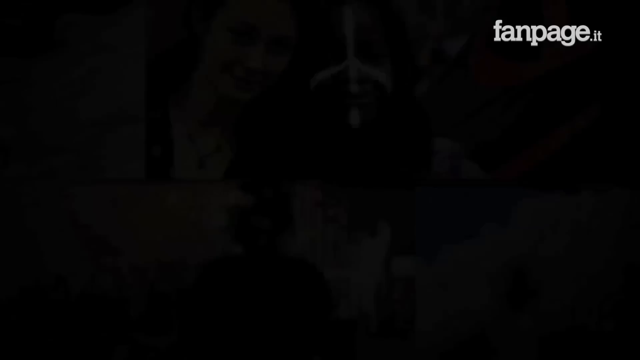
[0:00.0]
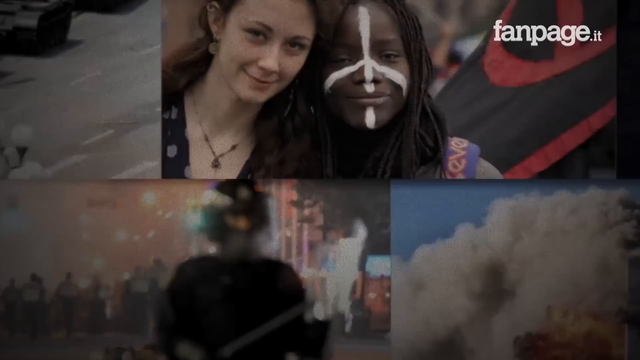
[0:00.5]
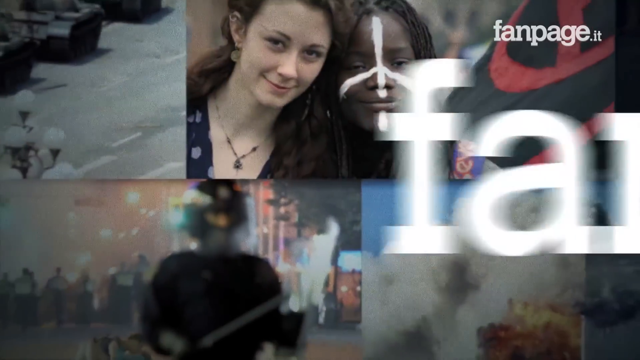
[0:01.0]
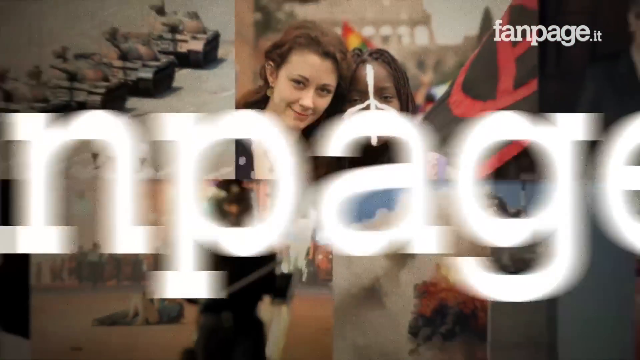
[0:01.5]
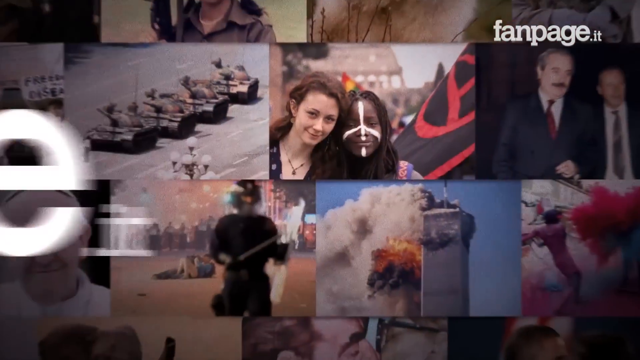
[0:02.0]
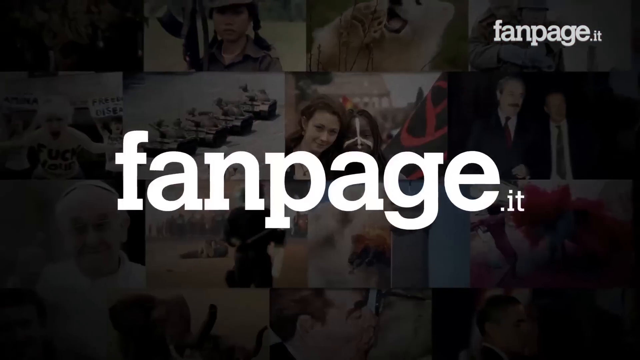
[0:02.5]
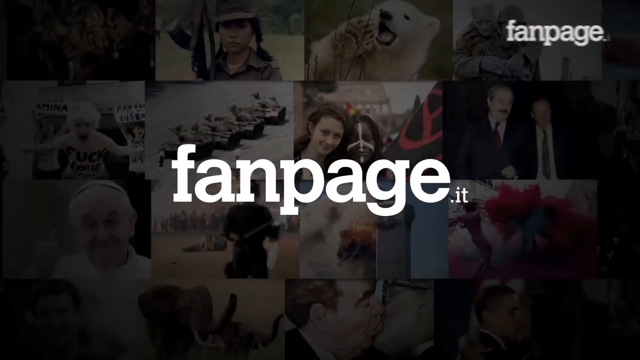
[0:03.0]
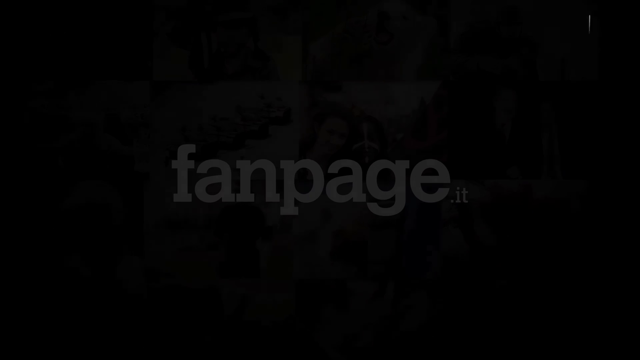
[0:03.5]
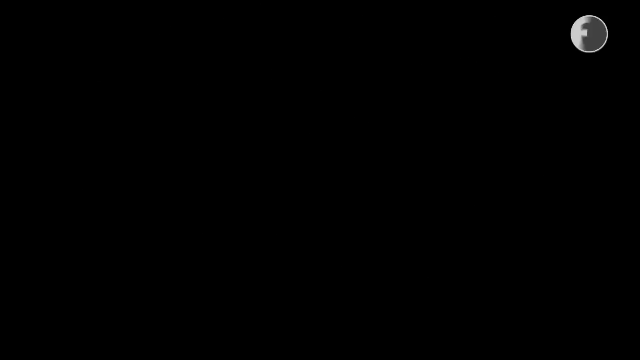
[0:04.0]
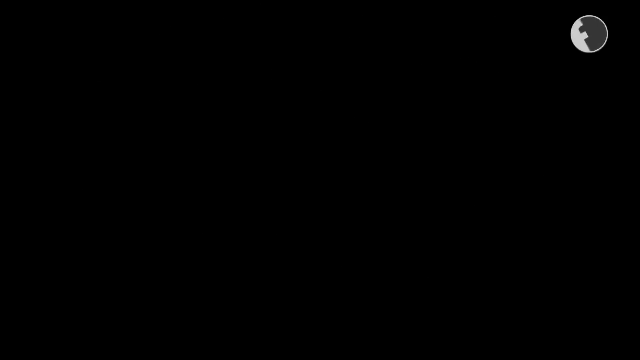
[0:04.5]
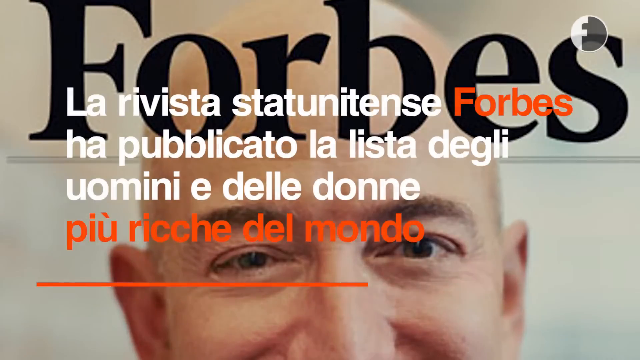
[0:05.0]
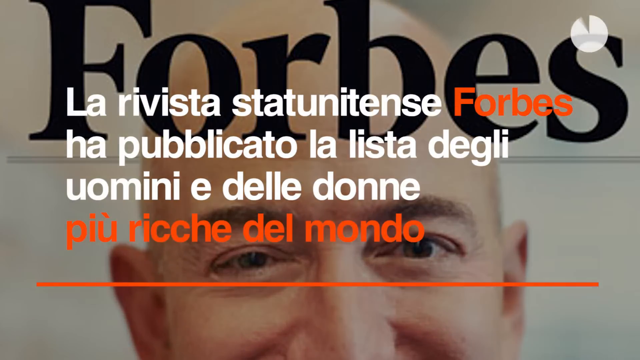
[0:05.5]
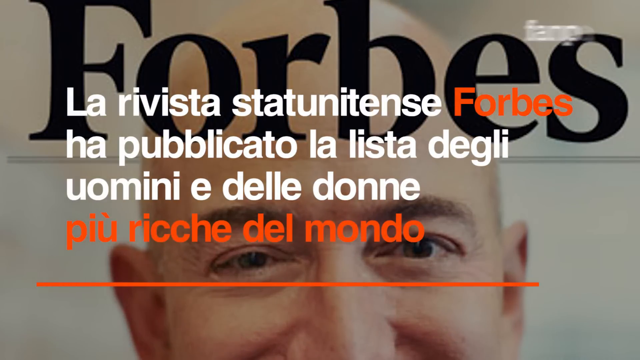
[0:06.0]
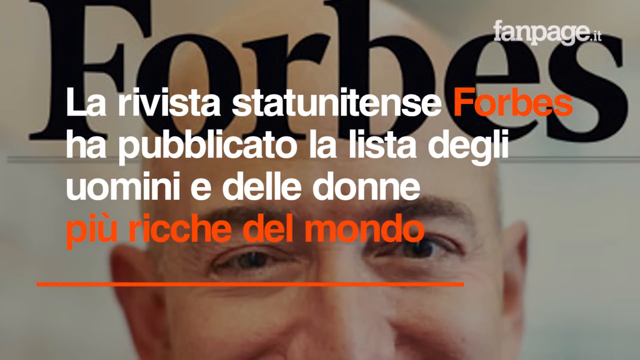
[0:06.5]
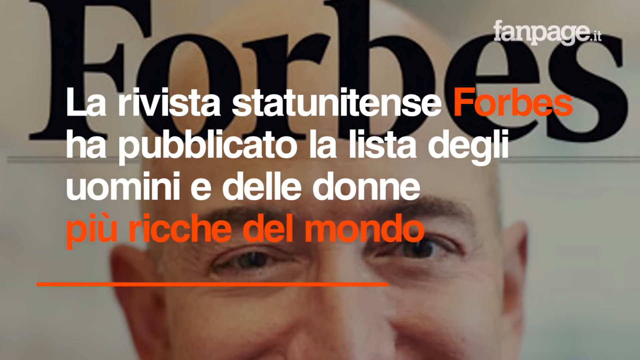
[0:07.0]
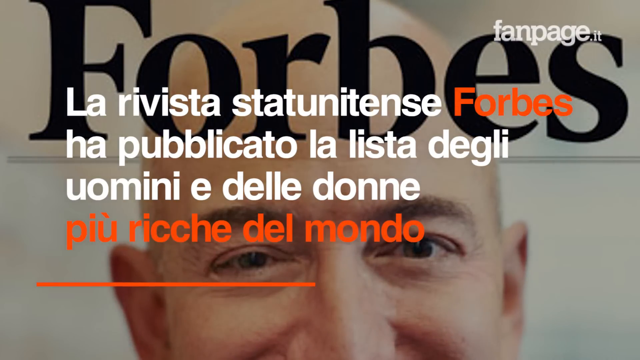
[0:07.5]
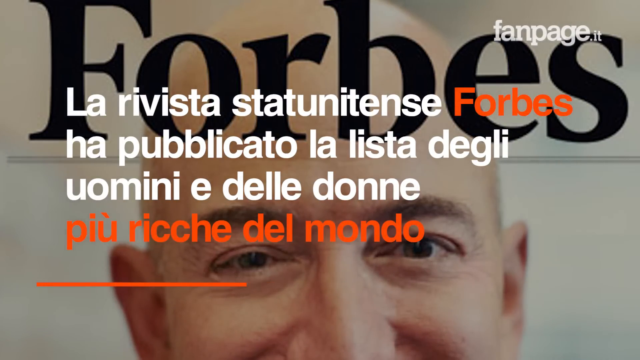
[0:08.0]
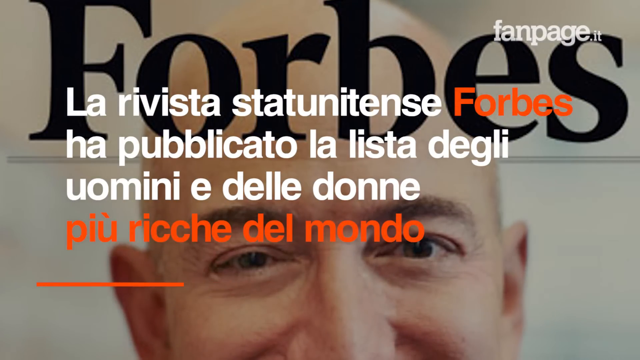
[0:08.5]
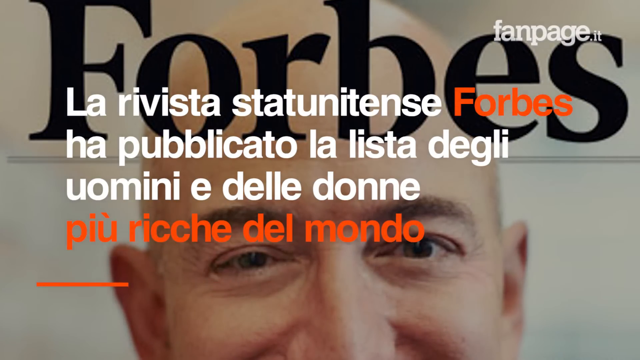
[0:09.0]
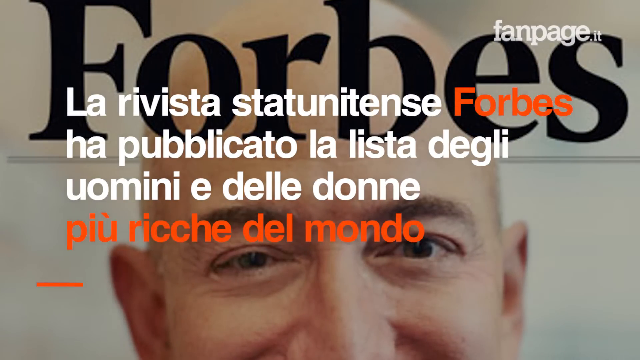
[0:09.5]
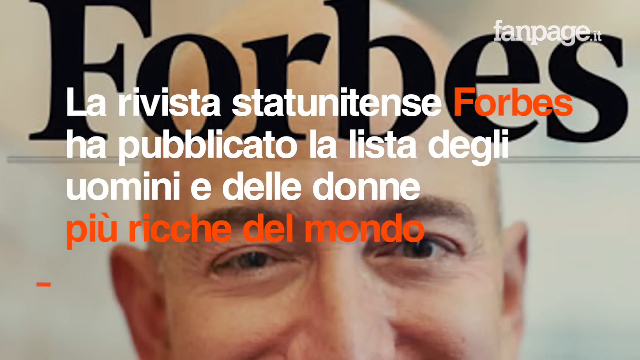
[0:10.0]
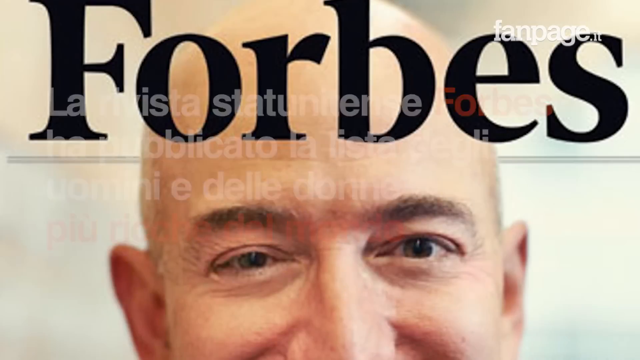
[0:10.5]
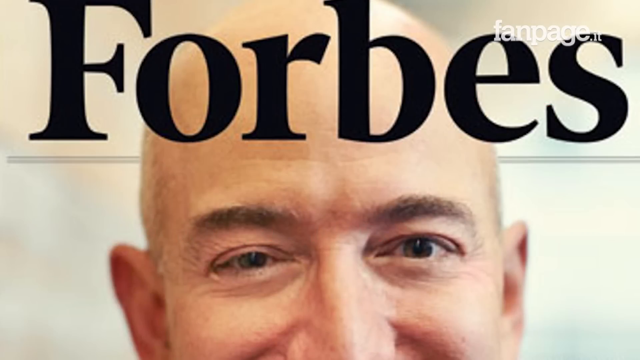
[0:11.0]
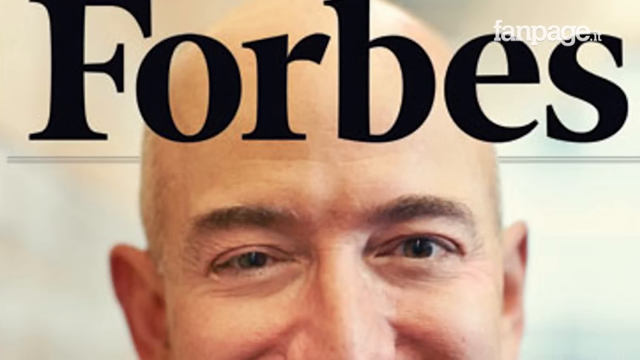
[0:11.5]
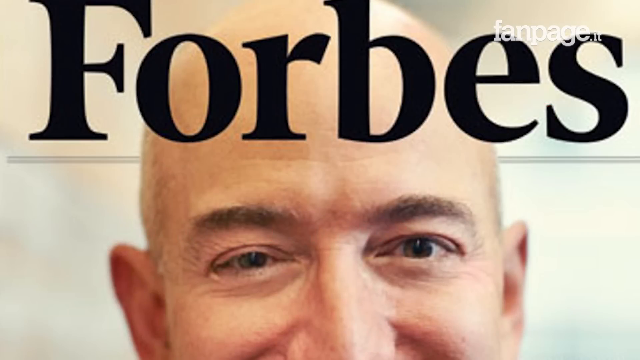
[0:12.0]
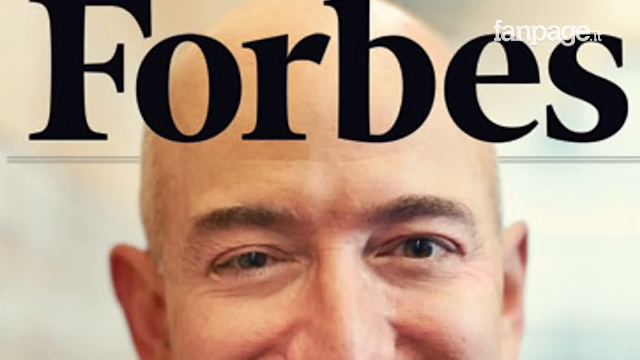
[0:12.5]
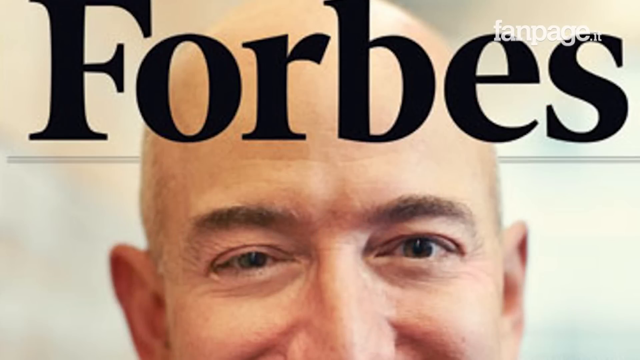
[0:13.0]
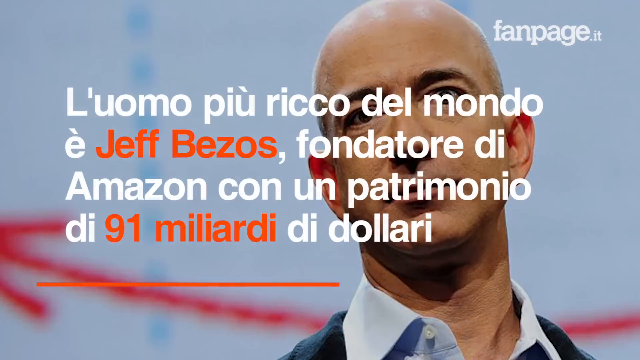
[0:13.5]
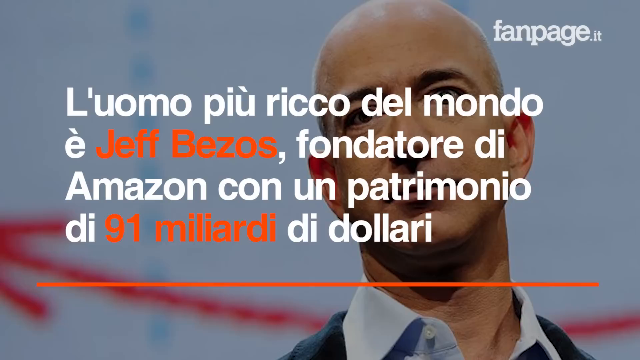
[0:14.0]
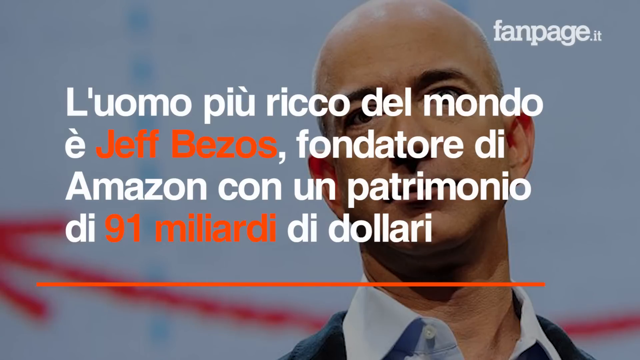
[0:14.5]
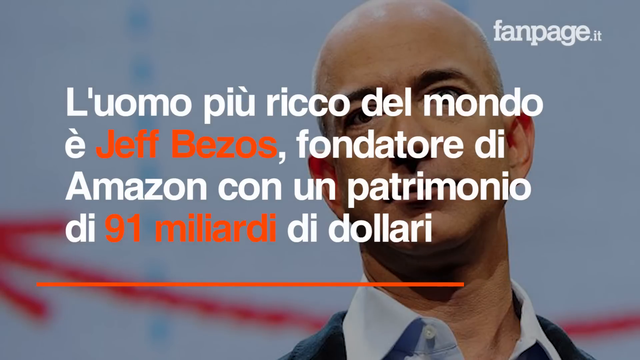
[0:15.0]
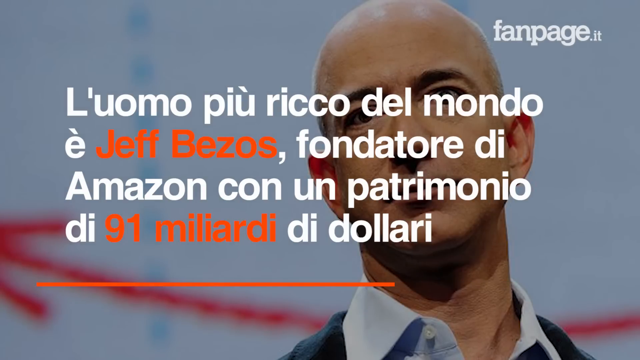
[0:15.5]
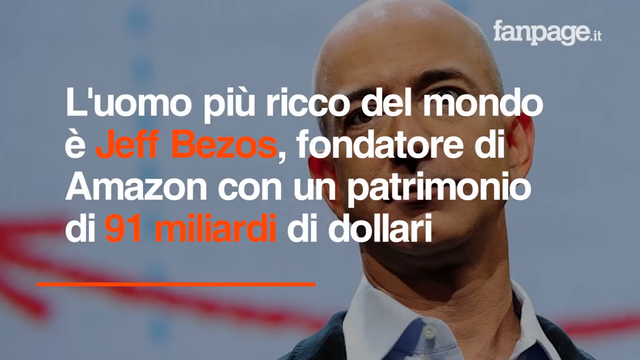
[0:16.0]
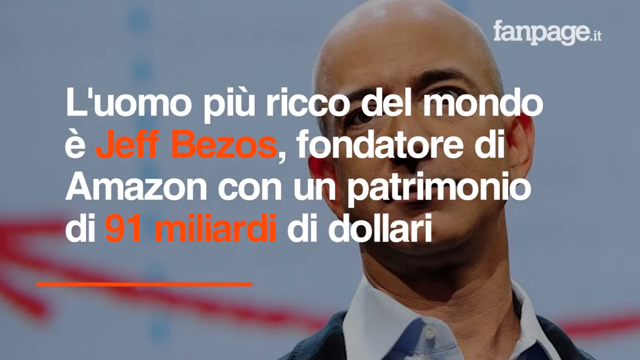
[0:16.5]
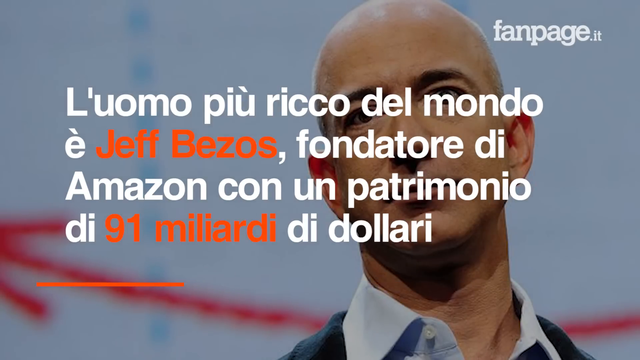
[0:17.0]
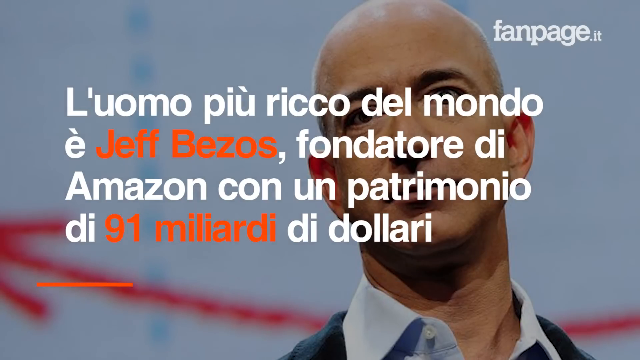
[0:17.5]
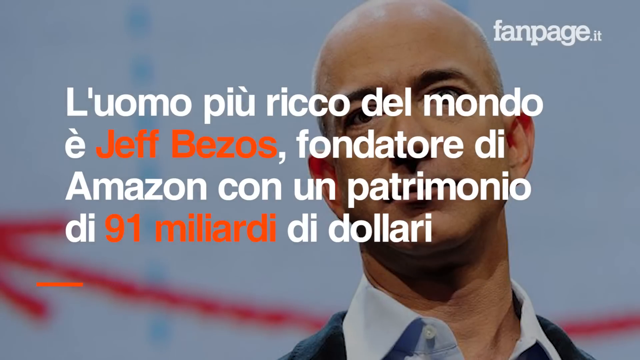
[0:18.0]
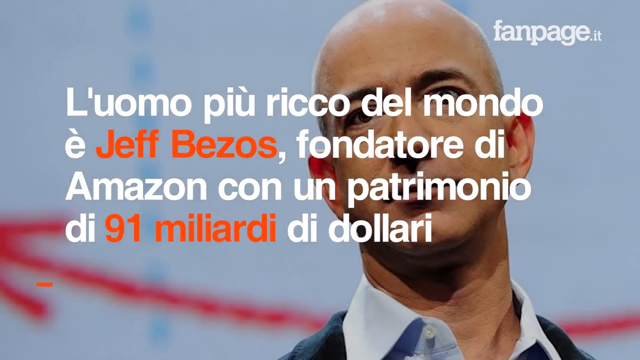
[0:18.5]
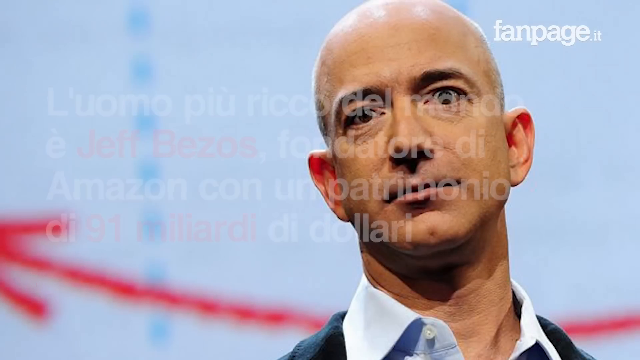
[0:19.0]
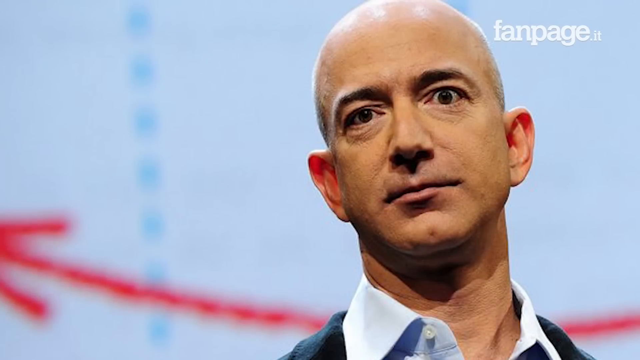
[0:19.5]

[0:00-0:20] The video begins with bold lettering reading "fan page" in the top right corner, followed by smaller lettering reading ".it". Images move toward the right across the top of the screen and images move toward the left across the bottom, while the text from the top right corner travels across the screen. As the view slowly pans out, more and more images become visible across the top and bottom. Next comes an image of what appears to be Jeff Bezos, visible only from his eyes up to his bald head. Across the top of it, "Forbes" appears in huge, bold, black lettering, with foreign-language text underneath. An orange bar runs across the bottom, moving from right to left; once it reaches the left side, the foreign-language text underneath disappears. The video then cuts to another shot of him on the right side, showing just his head from the neck up, tilted a little to the left. He is bald on top and clean-shaven, with somewhat bushy eyebrows and fairly big ears. Four lines of white text appear, except that "Jeff Bezos" is in orange and "91 Miliardi" is in orange. An orange bar across the bottom moves to the left again, and once it reaches the left, the text disappears. The background behind him is blue, and right behind him a red line runs across that looks like an arrow on the left side.